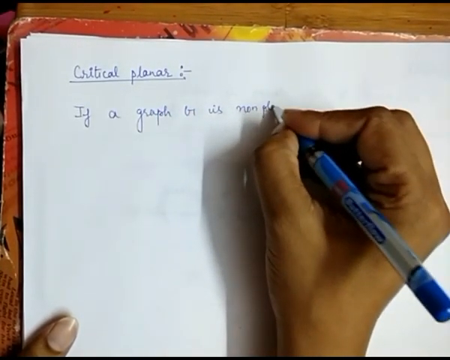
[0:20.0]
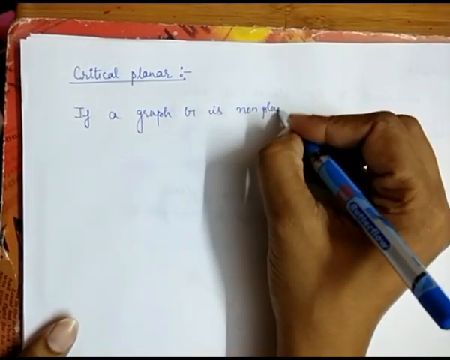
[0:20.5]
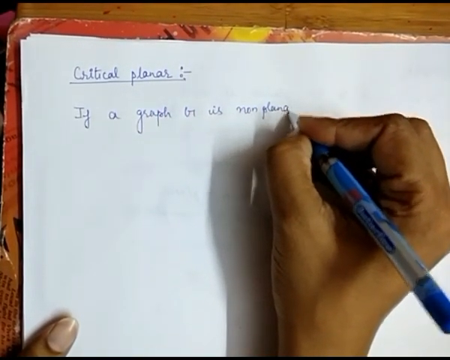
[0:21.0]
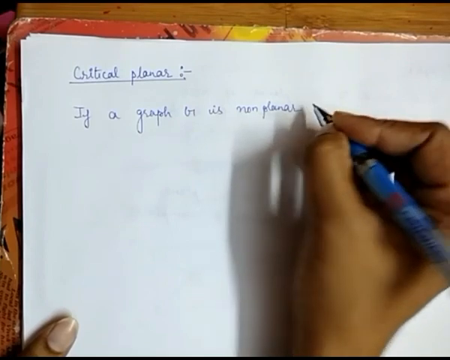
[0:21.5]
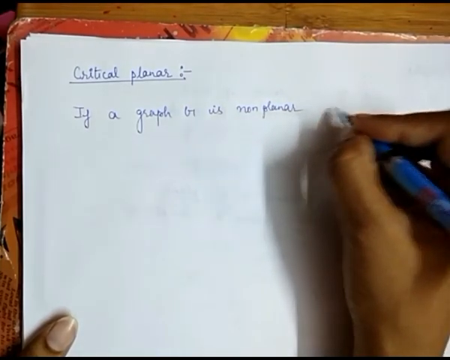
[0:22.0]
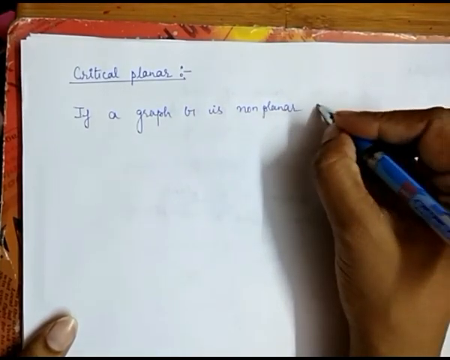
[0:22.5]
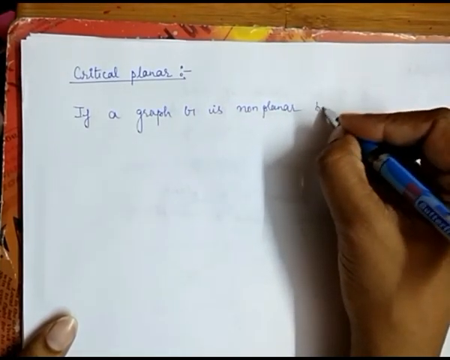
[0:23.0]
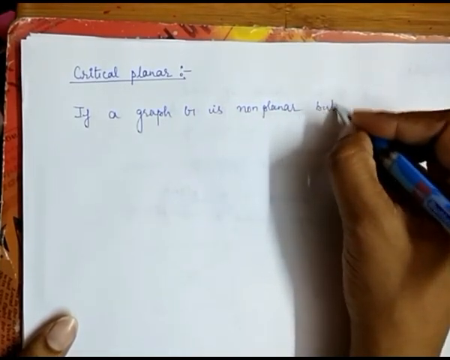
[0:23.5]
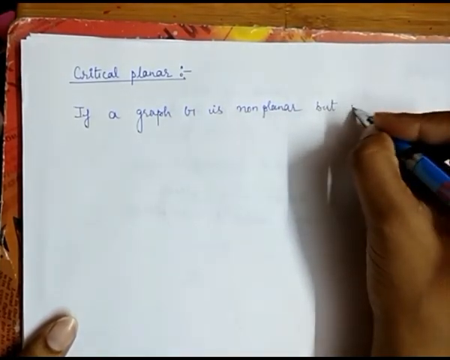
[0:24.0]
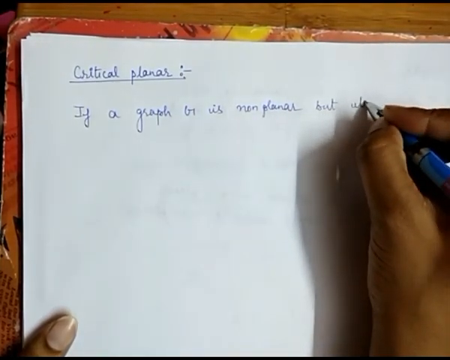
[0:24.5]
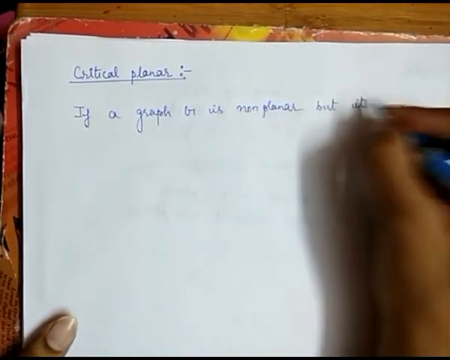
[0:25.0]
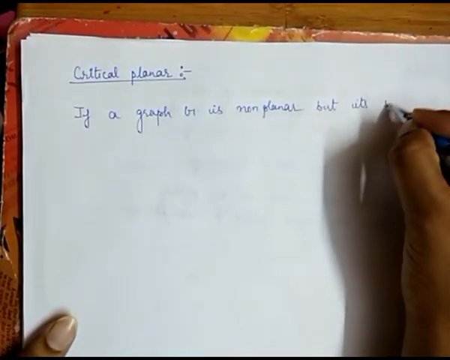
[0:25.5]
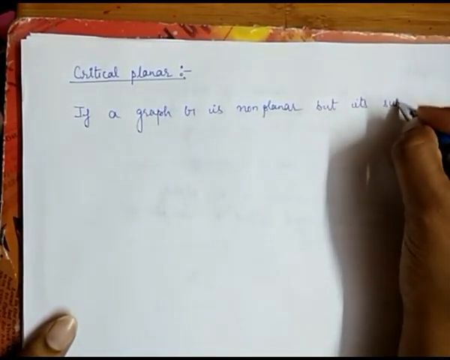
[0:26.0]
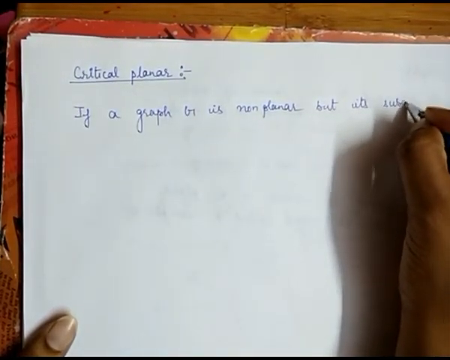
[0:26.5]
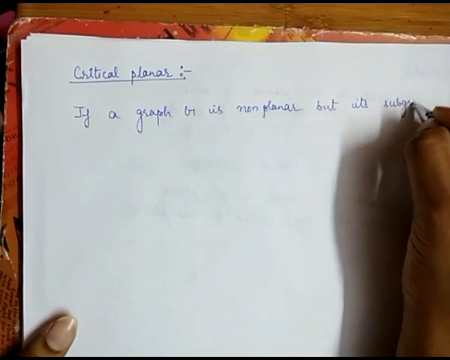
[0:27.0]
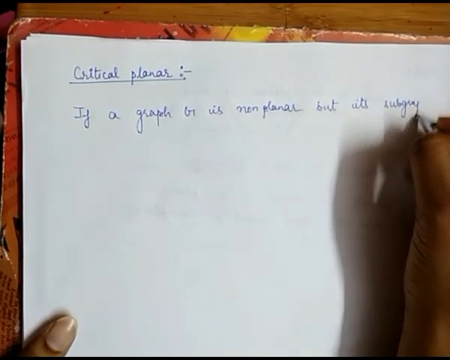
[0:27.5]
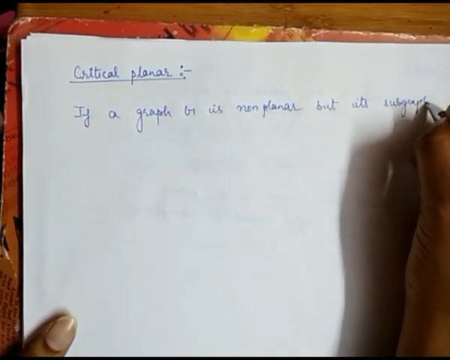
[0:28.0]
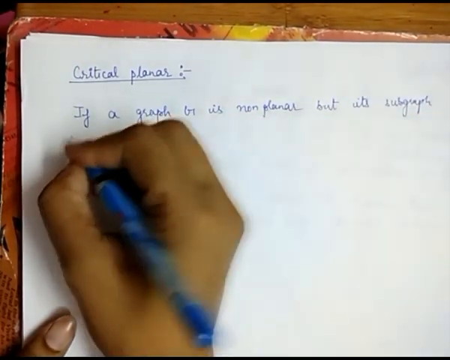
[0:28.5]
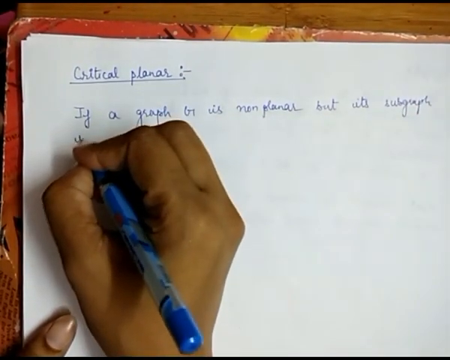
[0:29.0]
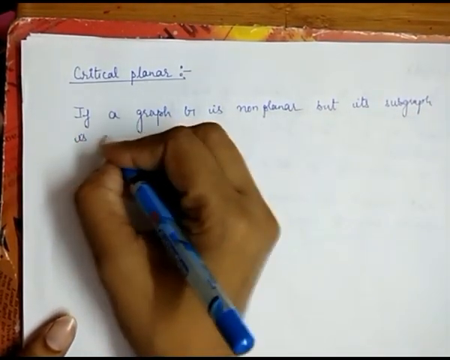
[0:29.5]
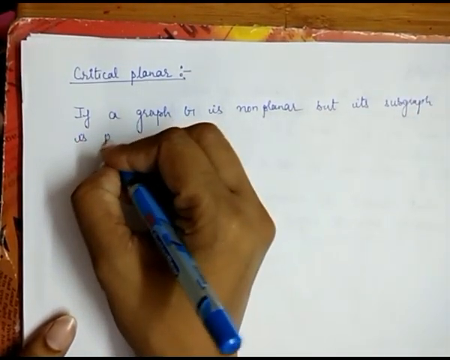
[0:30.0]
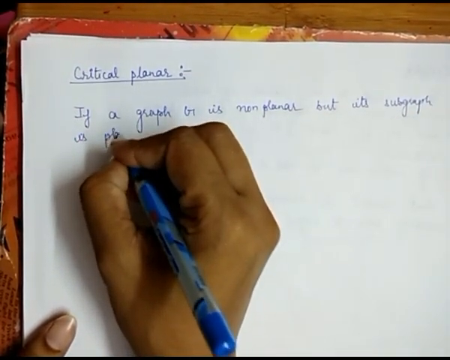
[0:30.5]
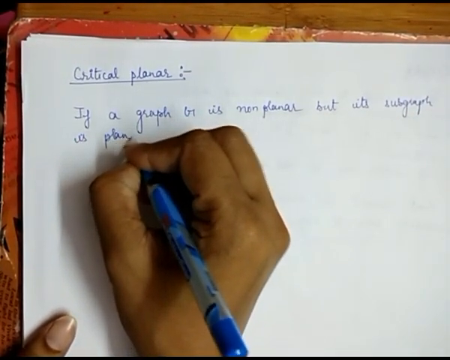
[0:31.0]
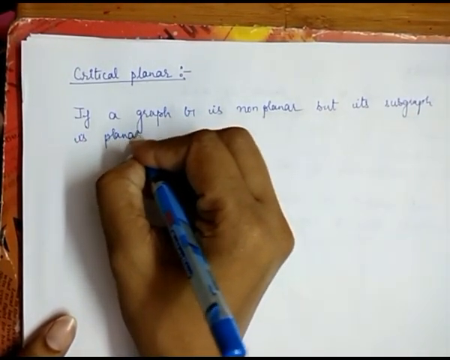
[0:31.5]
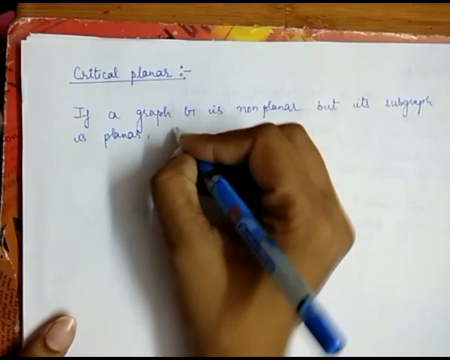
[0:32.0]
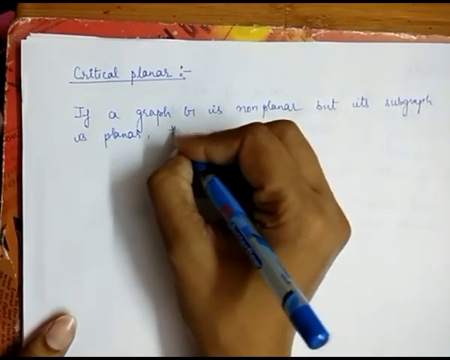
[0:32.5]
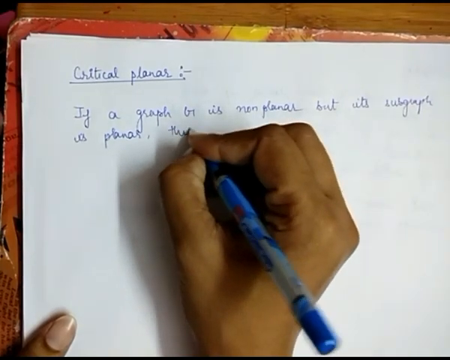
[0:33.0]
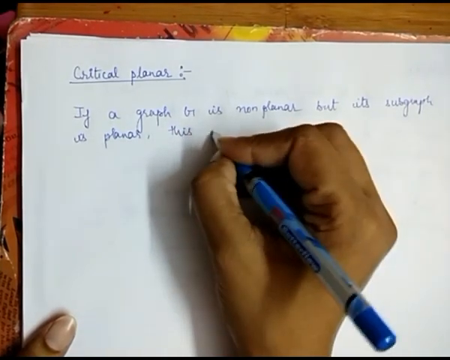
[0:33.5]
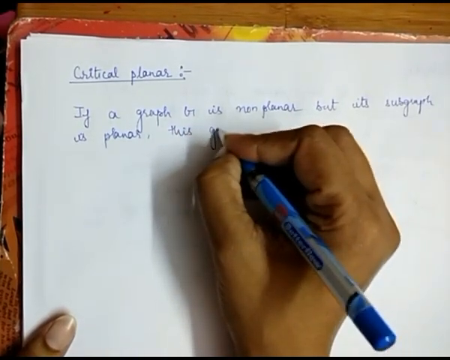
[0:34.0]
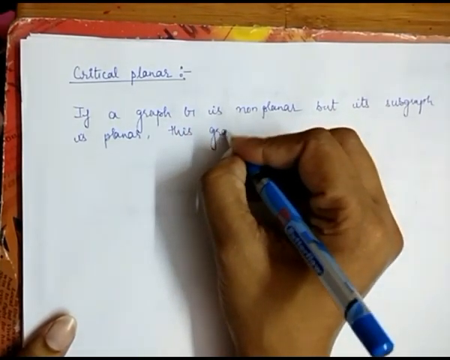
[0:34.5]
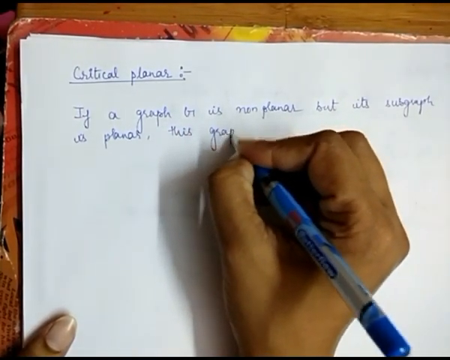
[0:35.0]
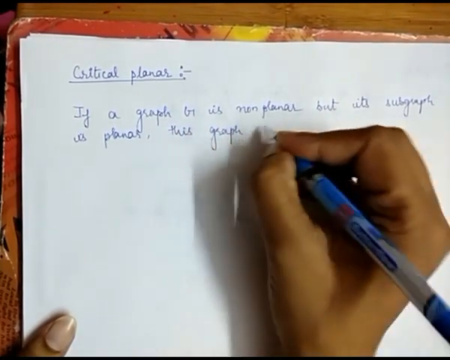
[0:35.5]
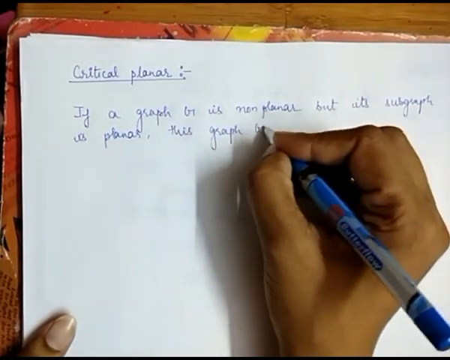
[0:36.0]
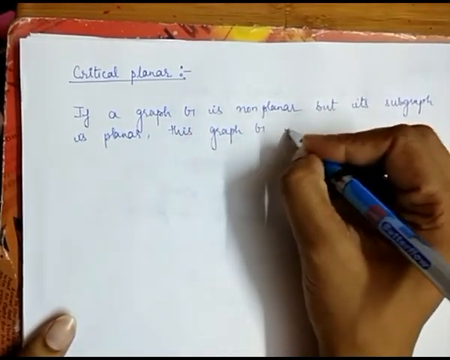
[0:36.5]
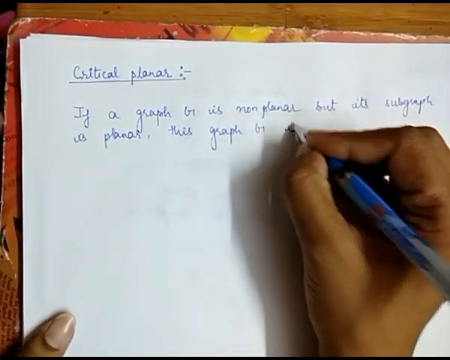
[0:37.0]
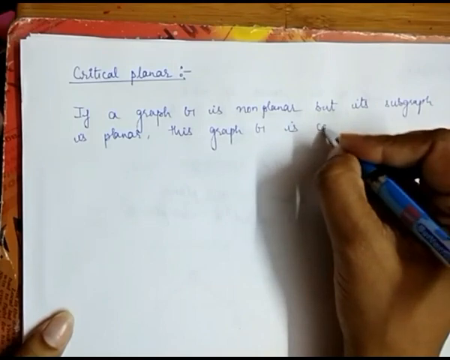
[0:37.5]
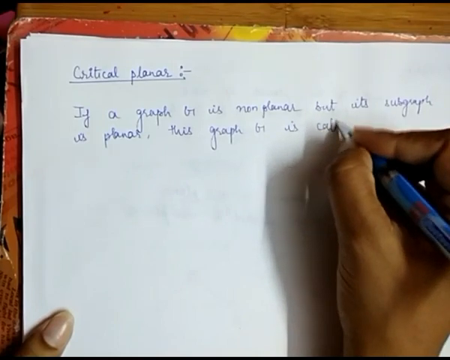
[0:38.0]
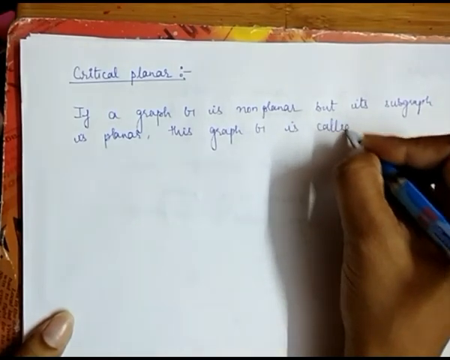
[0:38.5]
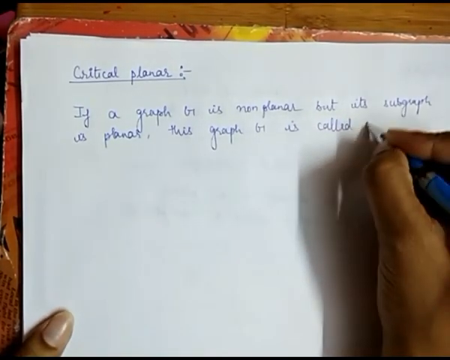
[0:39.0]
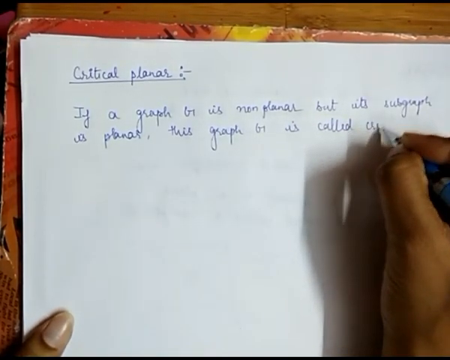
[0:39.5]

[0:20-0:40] On the same table, mat and white paper, the woman continues writing: "if a graph is non-planar. but it's subgraph, it's planar.. This graph is called". She writes quickly and without hesitation, though not so clearly that every word can be understood. Her left thumb, with a neatly manicured nail, holds down the paper while her right hand grips the blue and gray pen tightly, showing creases in her hand. The shadow of her hand moves across the paper as she writes with tight, precise movements, and a slight up-and-down movement of the mat on the table is just noticeable.